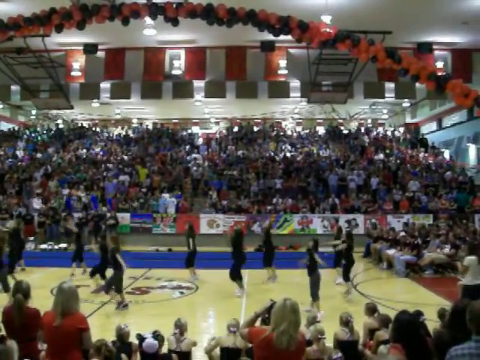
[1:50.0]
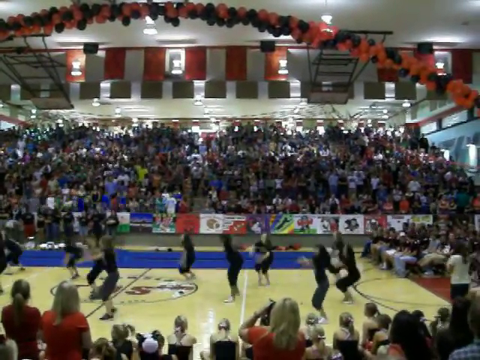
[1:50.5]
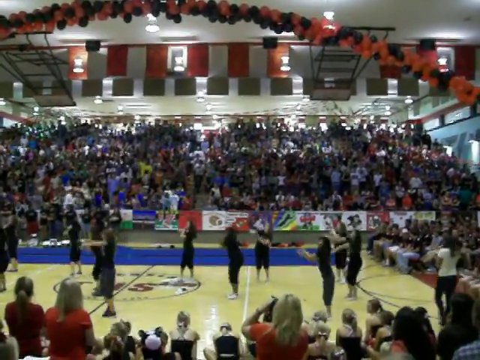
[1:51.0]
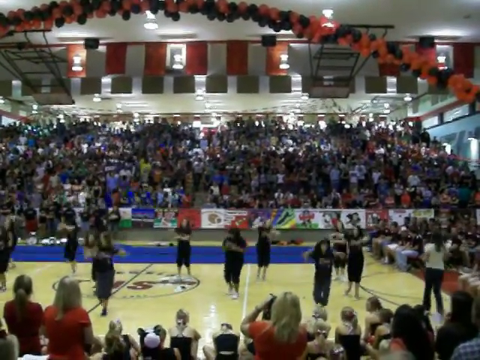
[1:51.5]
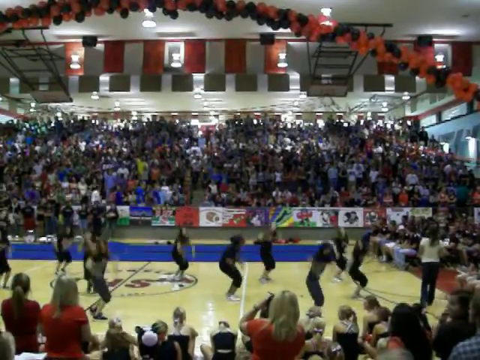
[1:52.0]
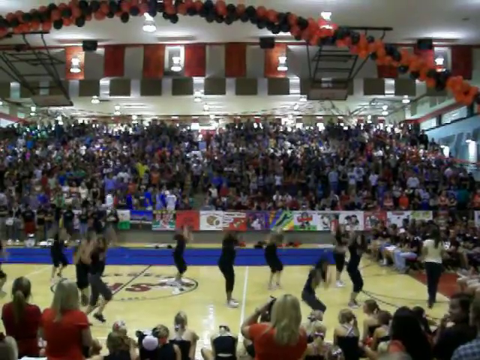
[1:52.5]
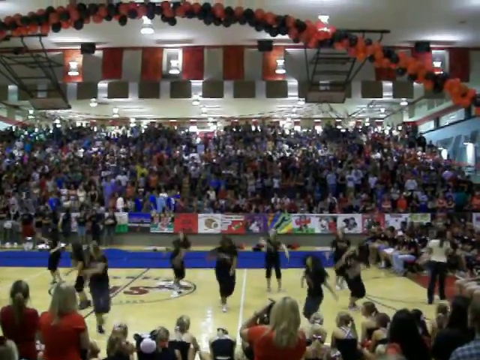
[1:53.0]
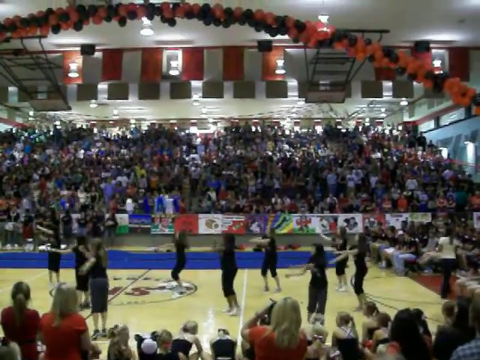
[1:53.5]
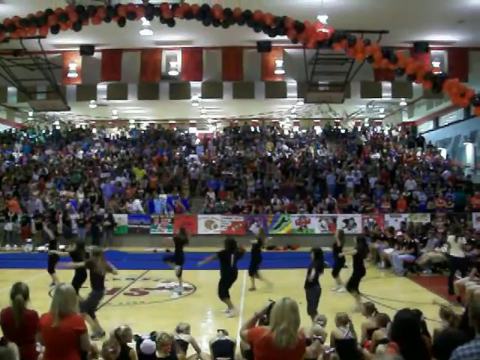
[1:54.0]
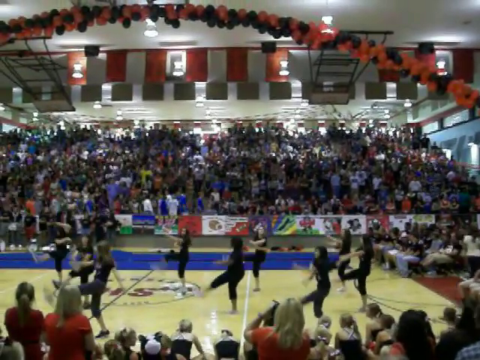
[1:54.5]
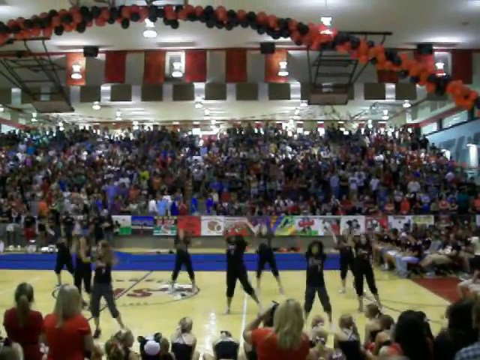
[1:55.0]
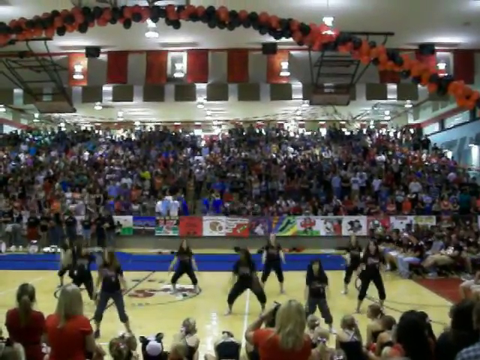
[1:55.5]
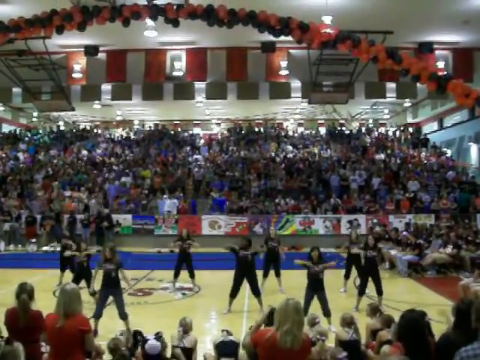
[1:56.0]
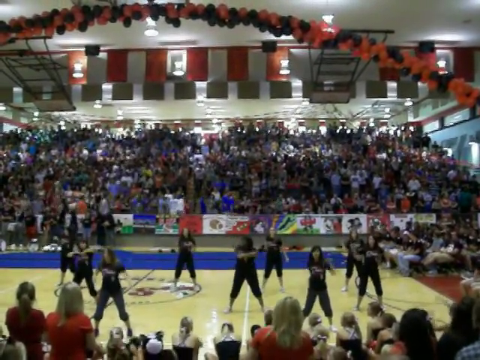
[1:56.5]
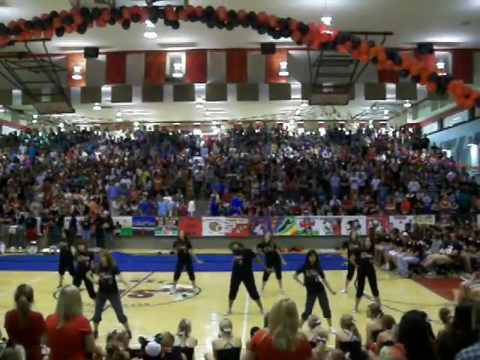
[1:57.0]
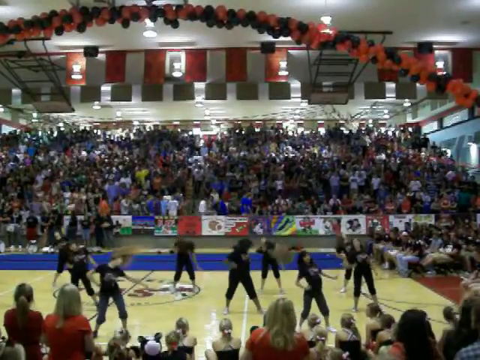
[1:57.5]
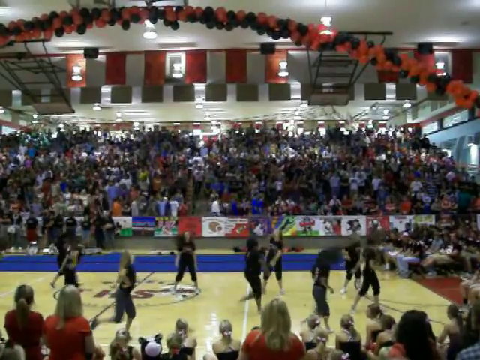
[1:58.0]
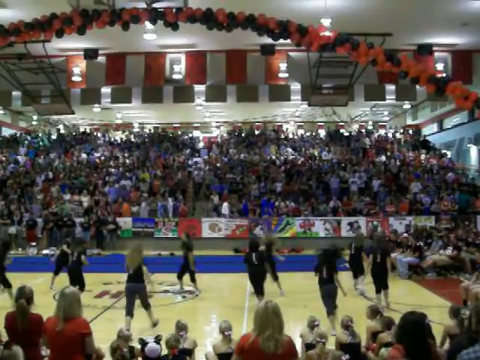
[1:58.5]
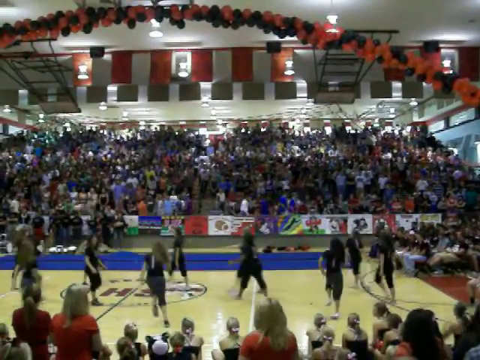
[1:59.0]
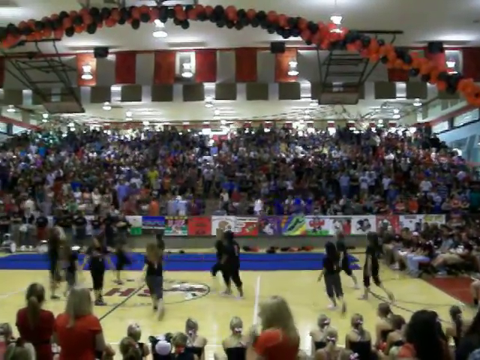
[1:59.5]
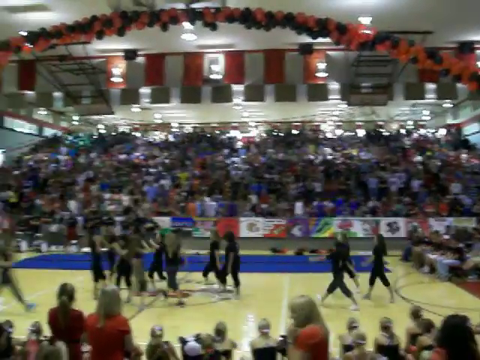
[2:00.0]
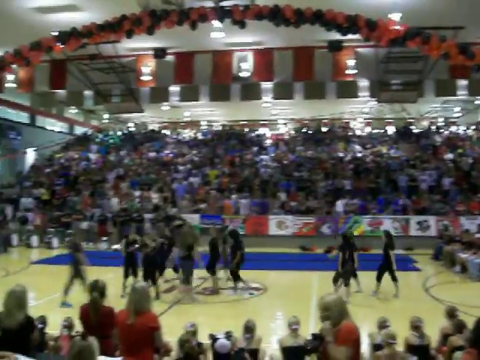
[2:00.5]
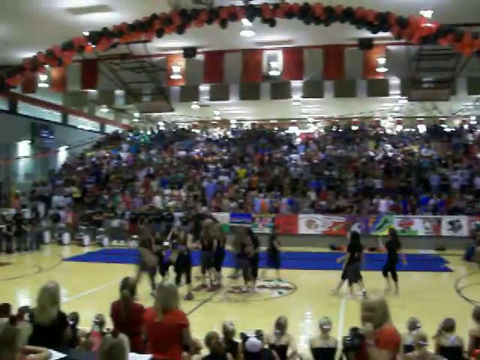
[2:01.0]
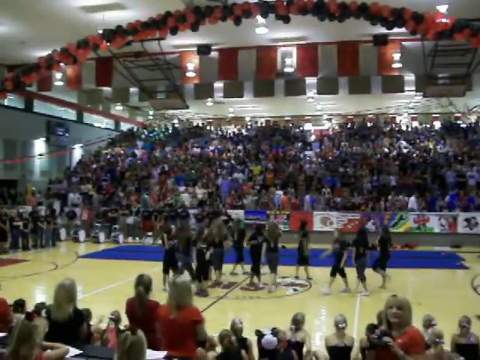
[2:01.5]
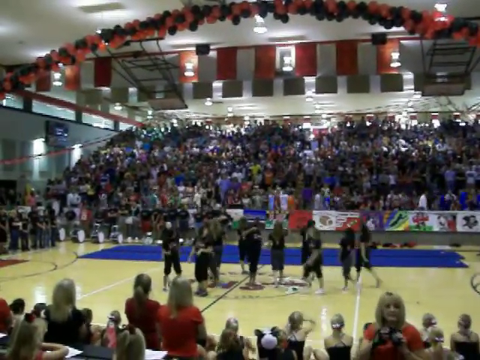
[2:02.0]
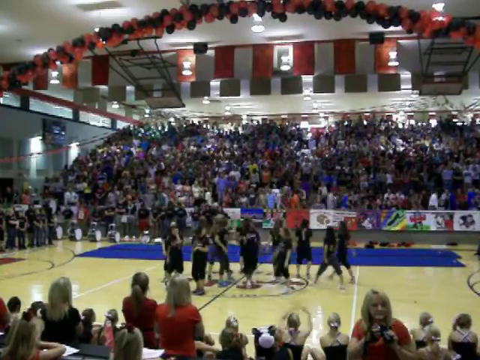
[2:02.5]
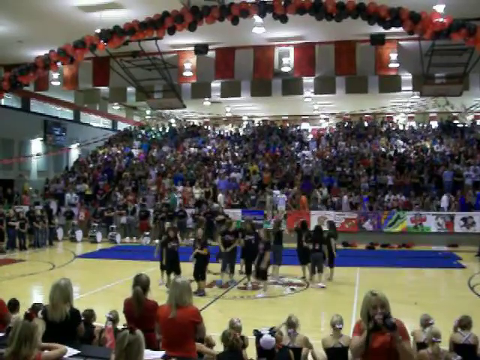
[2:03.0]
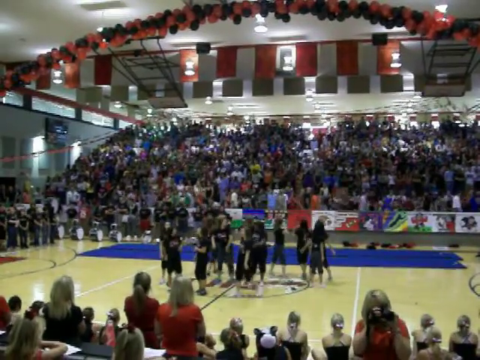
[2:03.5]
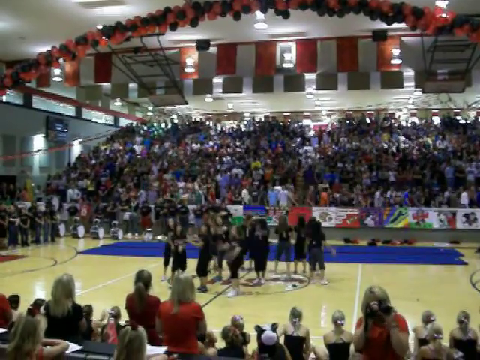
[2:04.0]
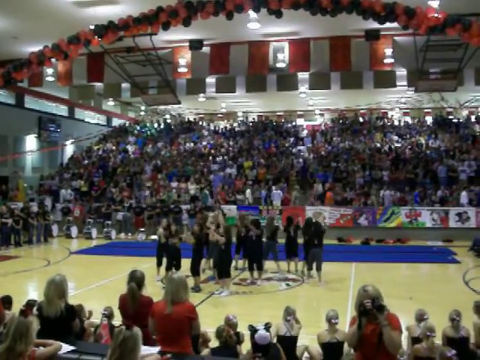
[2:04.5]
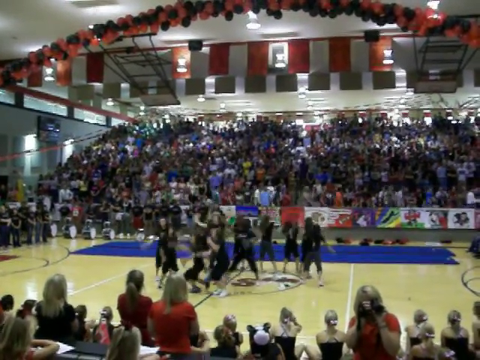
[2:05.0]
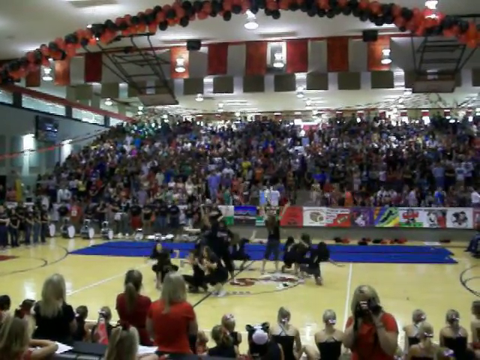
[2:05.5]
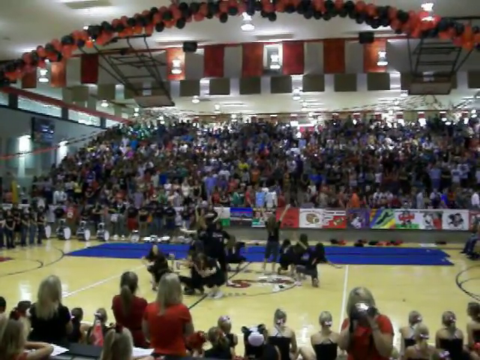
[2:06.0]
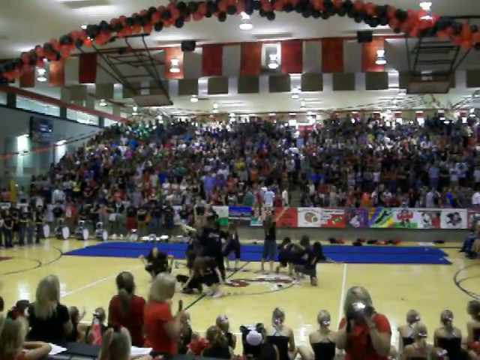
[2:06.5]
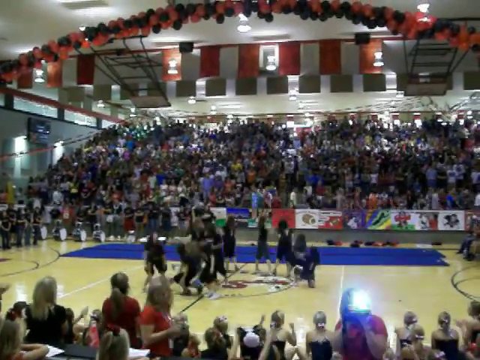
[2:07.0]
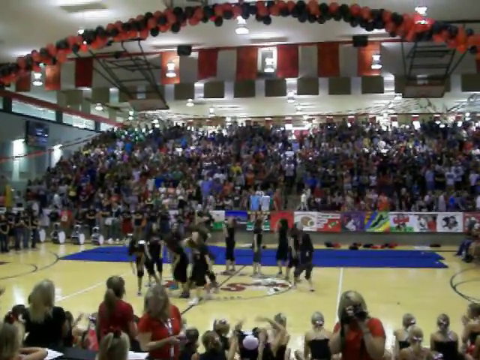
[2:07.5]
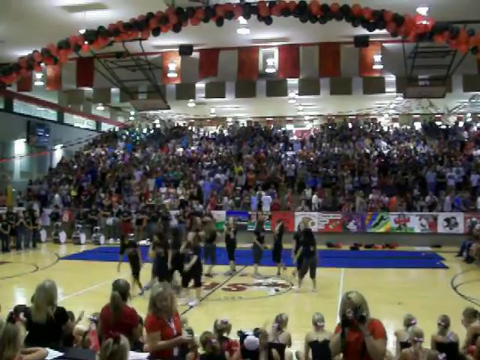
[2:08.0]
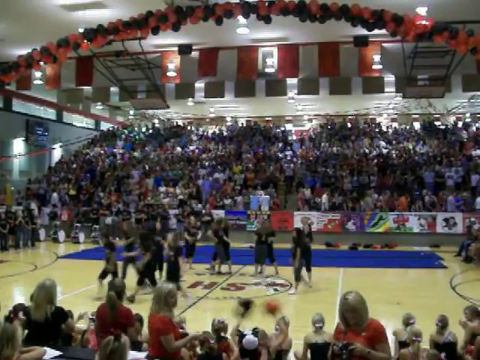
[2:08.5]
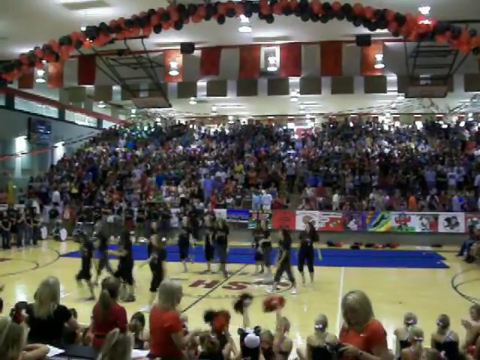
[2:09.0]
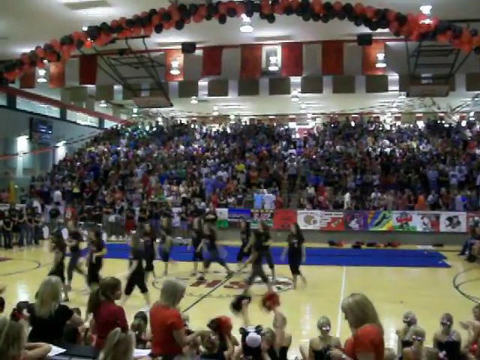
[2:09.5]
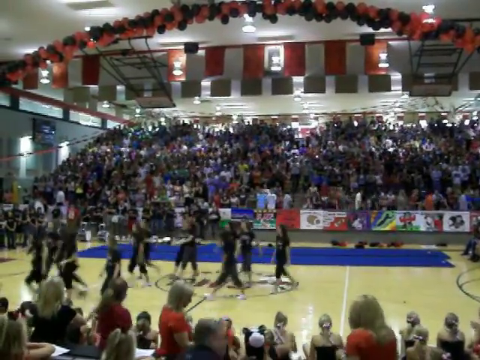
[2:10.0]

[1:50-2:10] A team, apparently cheerleaders, a dance squad or a pep squad, performs a dance routine on a gym floor at what looks like a special event. They appear to be finishing their routine. They start sort of close to the camera, then sort of move closer into a circle, go to the back of the court, finish, and walk off the court. A few hundred people watch from the stands, and more people are in the stands on the other side of the court. Balloons hang from the ceiling. Three of the four walls are visible; it looks like a small, regular-sized gym, probably for a high school or college.